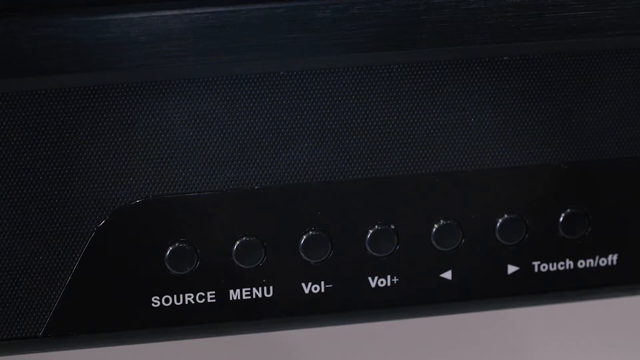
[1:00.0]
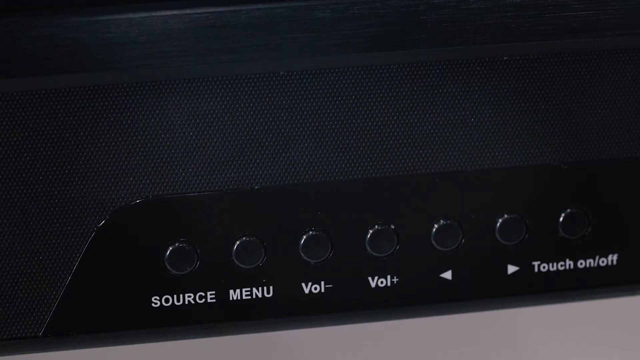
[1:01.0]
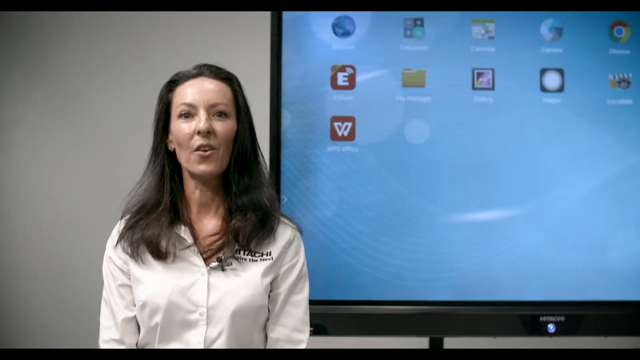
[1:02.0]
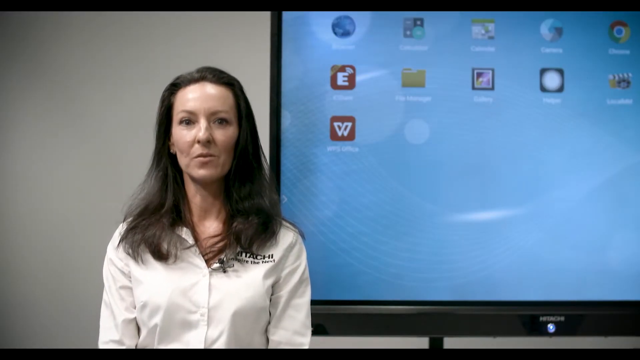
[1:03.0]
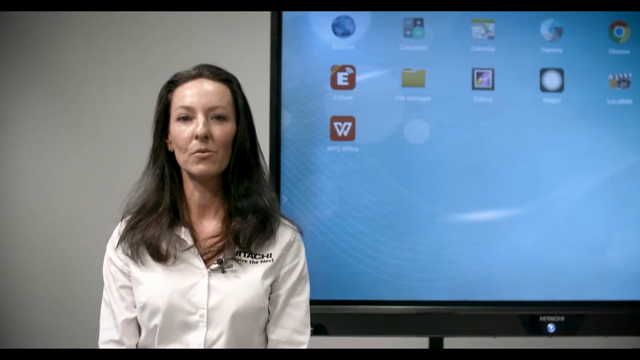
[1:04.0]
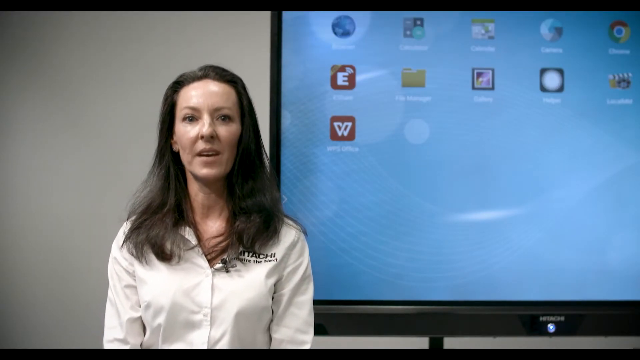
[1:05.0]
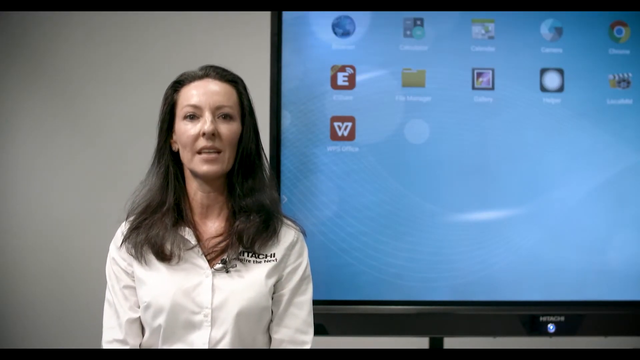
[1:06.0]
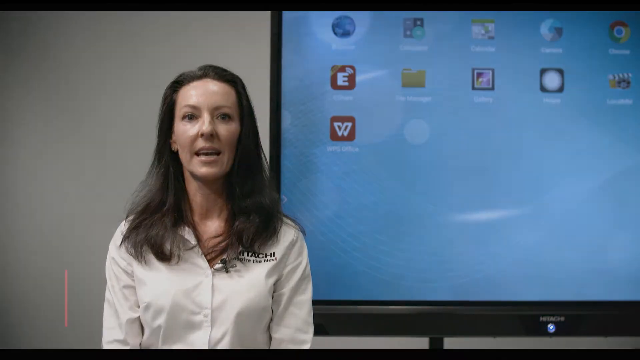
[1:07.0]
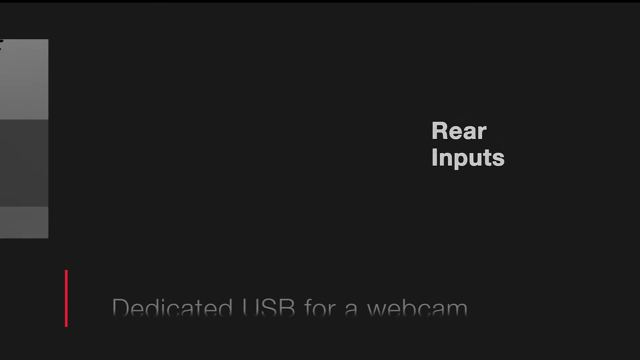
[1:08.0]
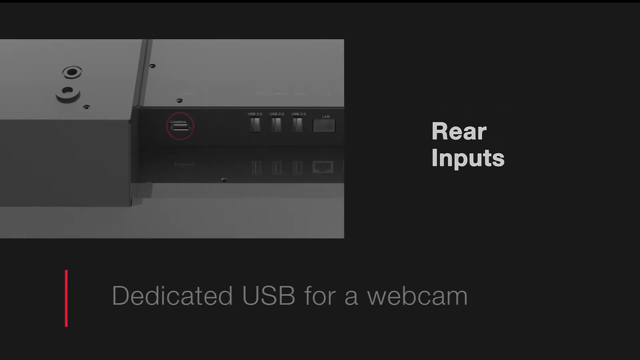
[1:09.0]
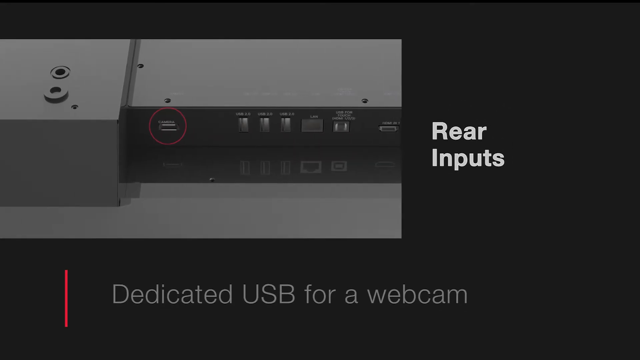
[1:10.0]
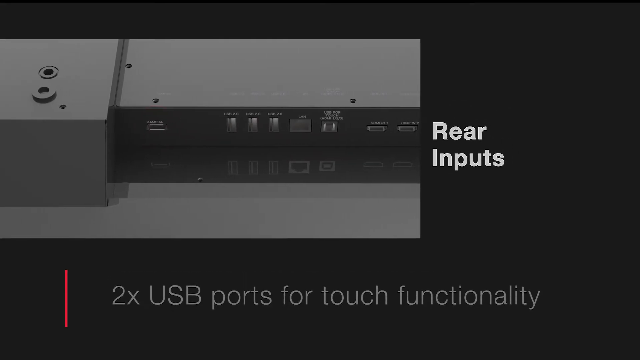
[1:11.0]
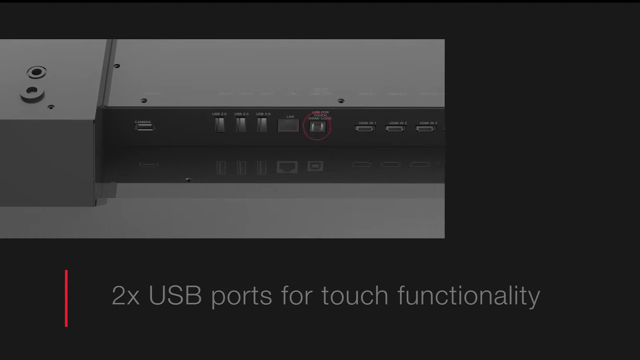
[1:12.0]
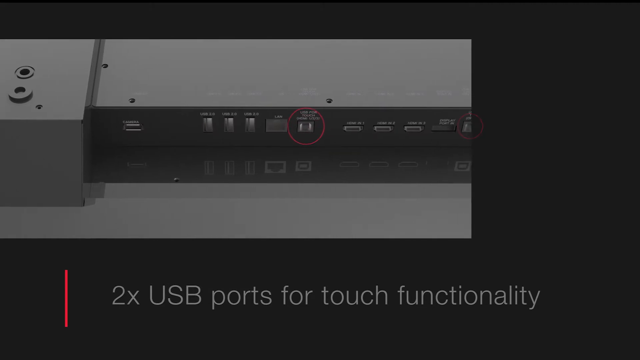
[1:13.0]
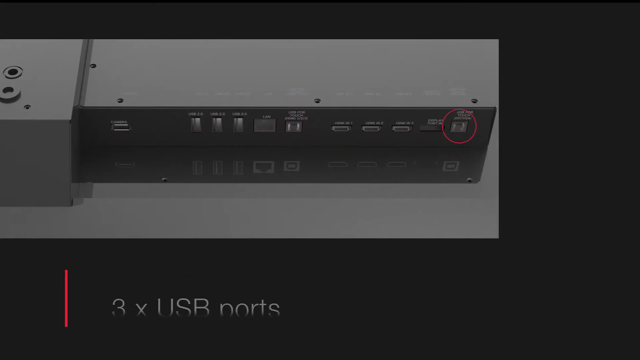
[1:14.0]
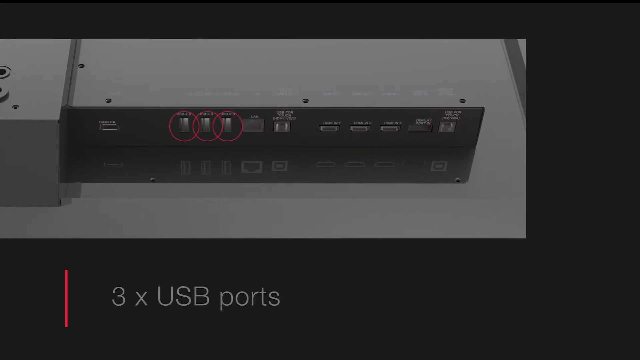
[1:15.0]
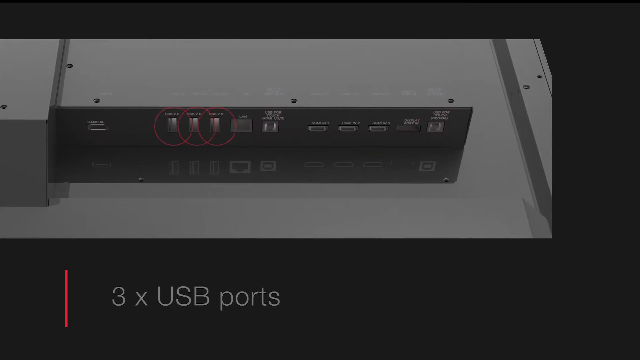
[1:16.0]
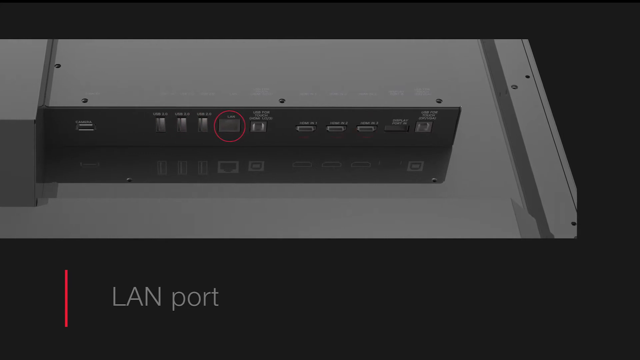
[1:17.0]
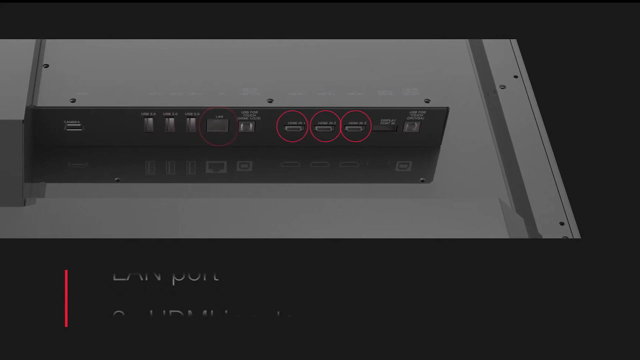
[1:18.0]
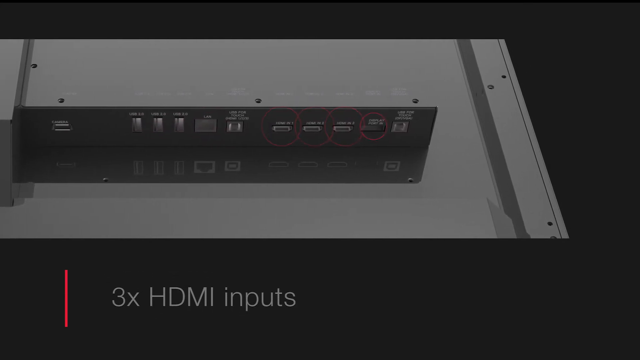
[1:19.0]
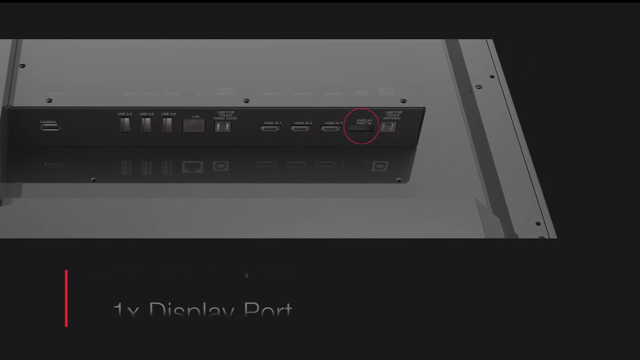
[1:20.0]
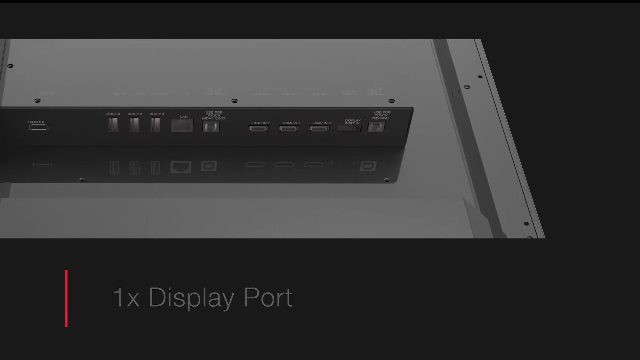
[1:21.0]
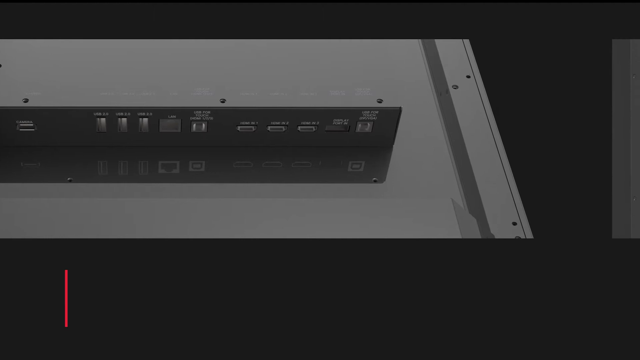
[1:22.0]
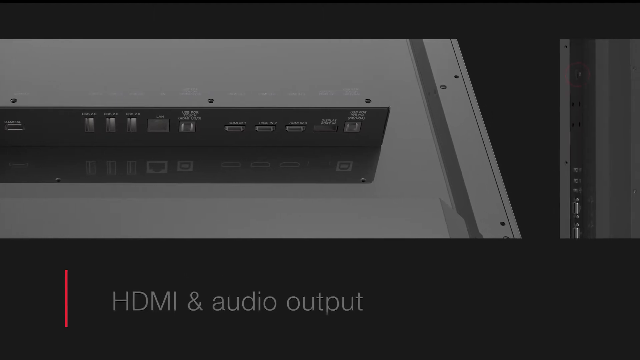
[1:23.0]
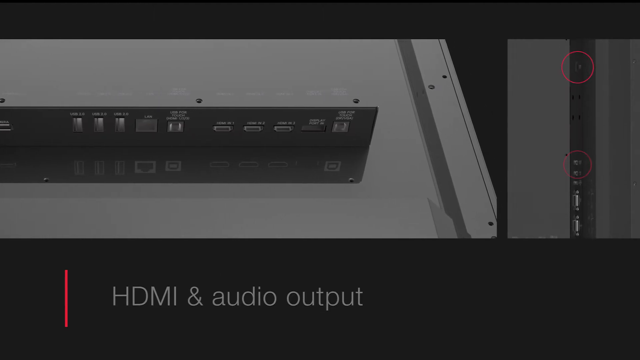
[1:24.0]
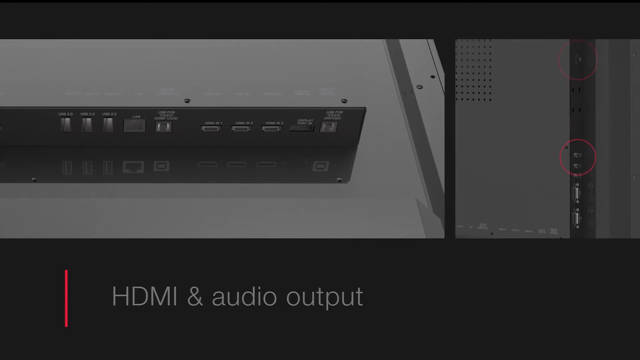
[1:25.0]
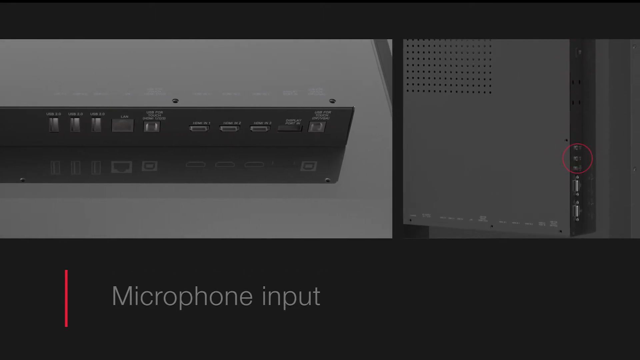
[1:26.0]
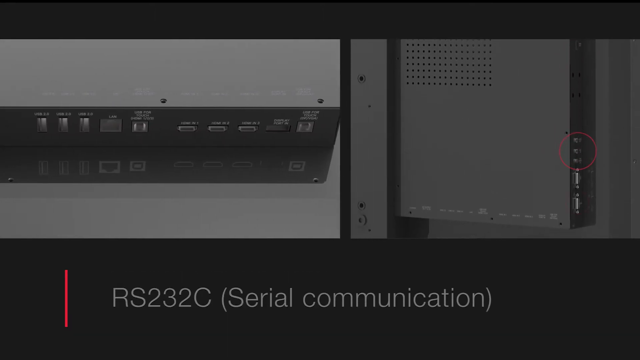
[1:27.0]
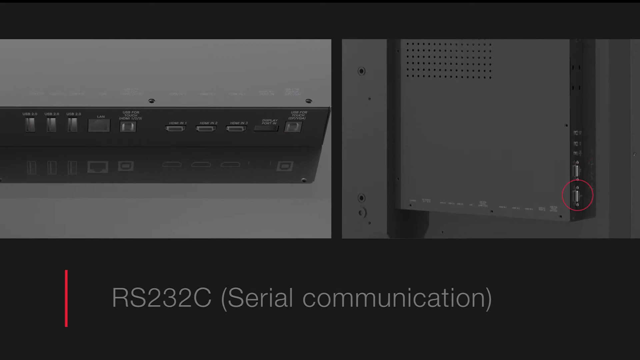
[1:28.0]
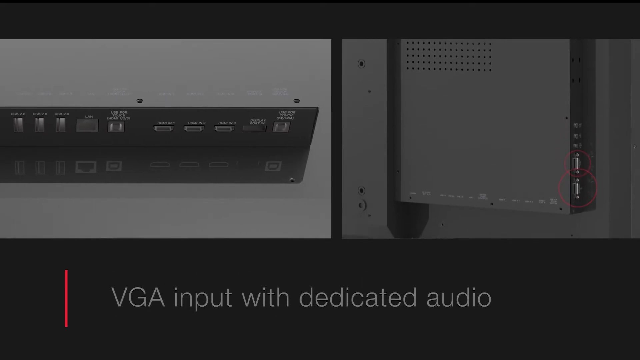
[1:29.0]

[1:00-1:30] The woman shows more ports: two USB ports for touch functionality, three USB ports, a LAN port, 3x HDMI input, one DisplayPort, HDMI and audio output, a microphone input, "RS-232C (serial communication)," and a VGA input with dedicated audio.